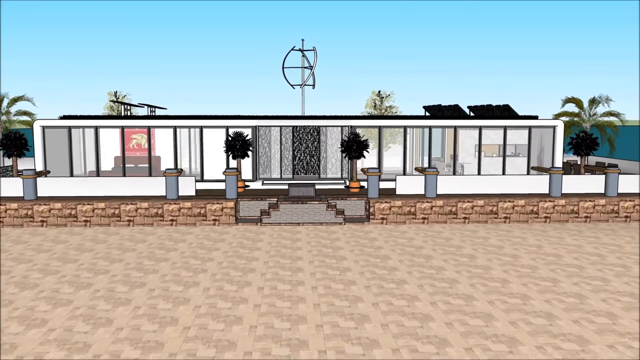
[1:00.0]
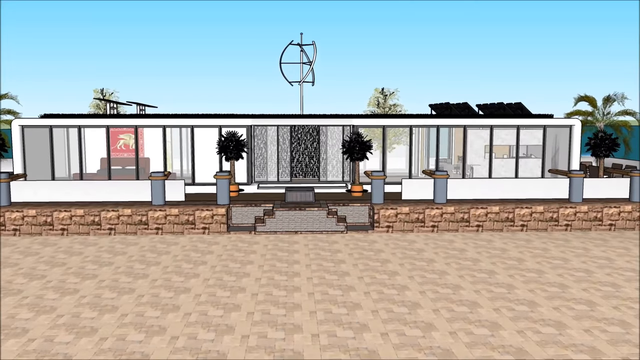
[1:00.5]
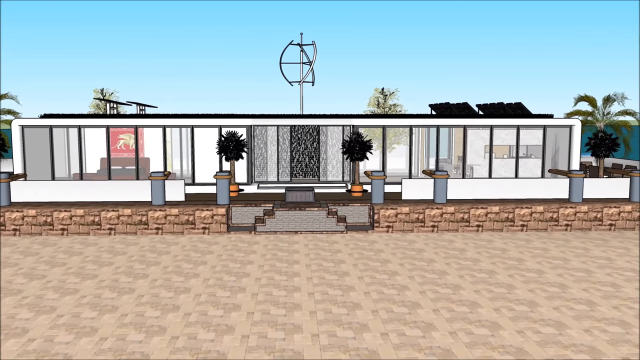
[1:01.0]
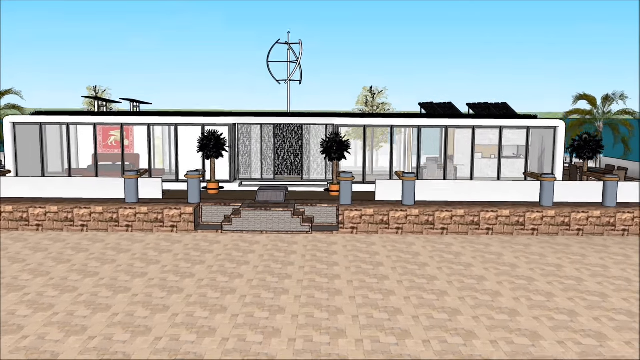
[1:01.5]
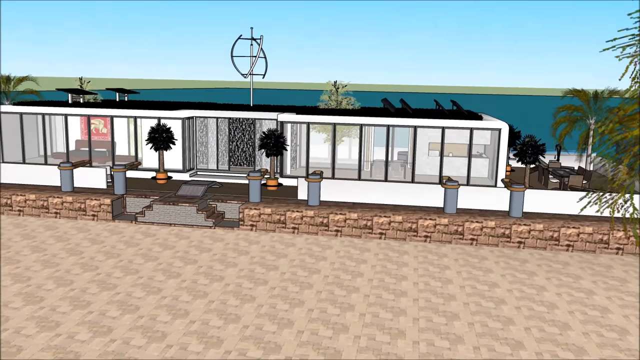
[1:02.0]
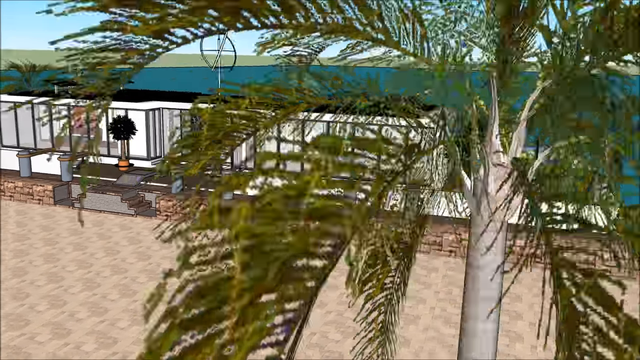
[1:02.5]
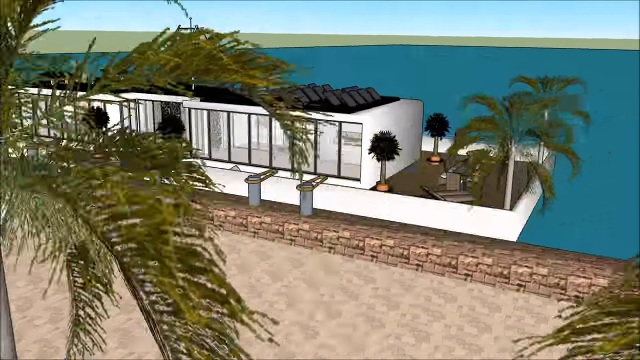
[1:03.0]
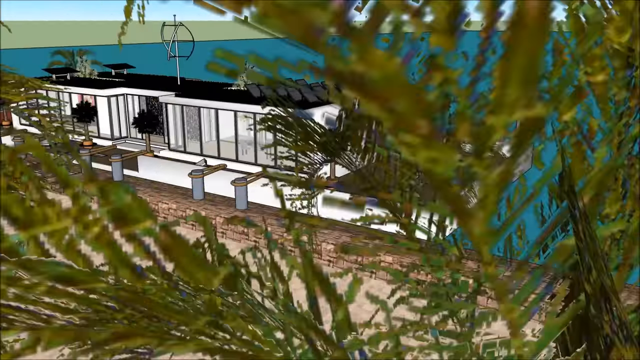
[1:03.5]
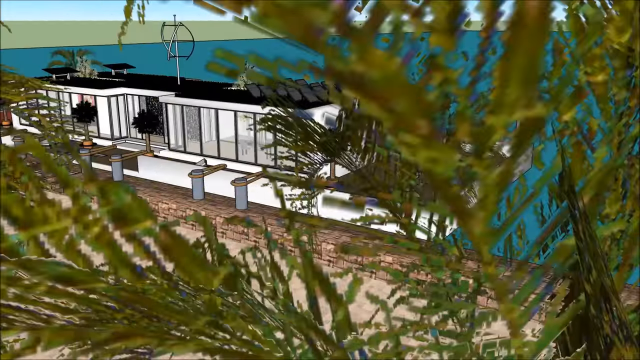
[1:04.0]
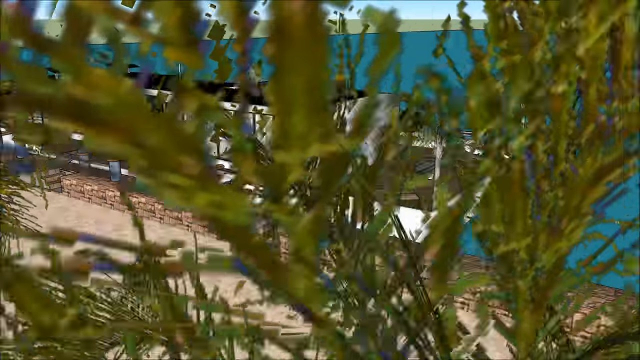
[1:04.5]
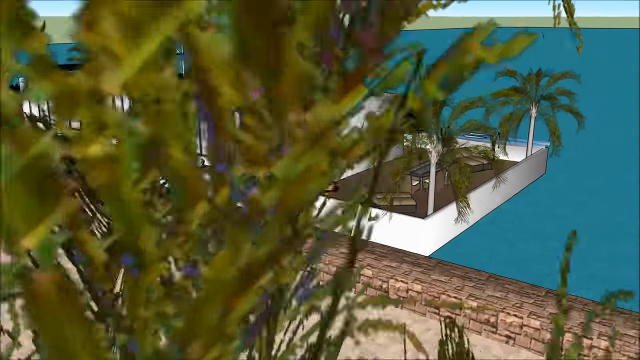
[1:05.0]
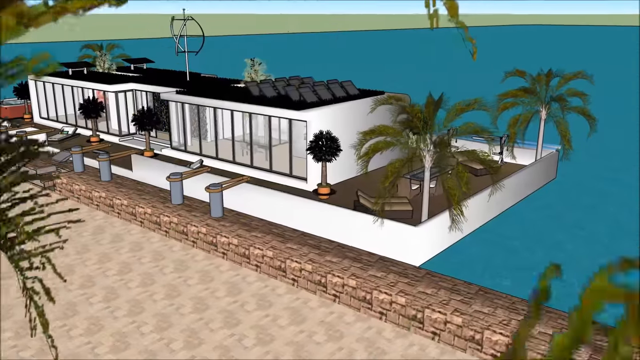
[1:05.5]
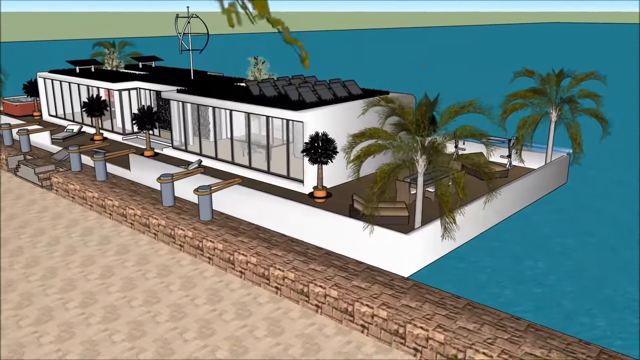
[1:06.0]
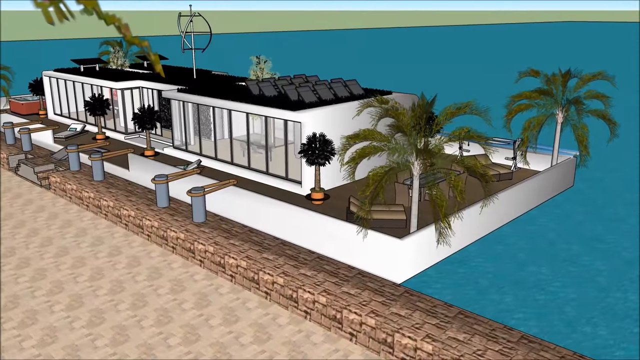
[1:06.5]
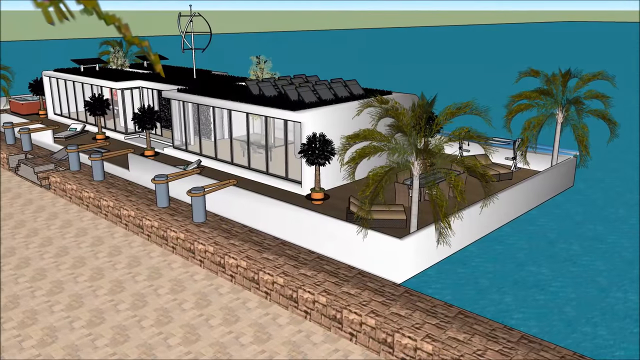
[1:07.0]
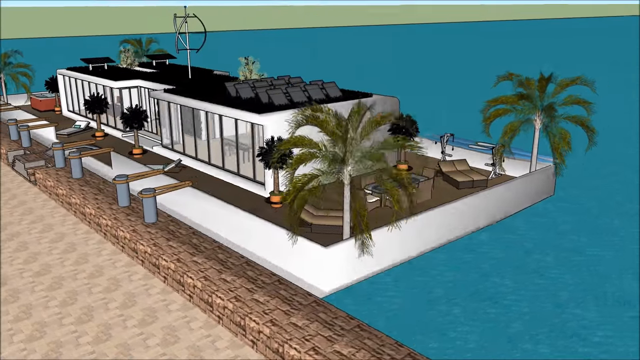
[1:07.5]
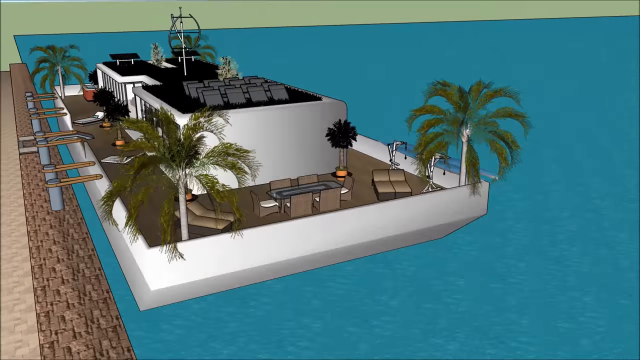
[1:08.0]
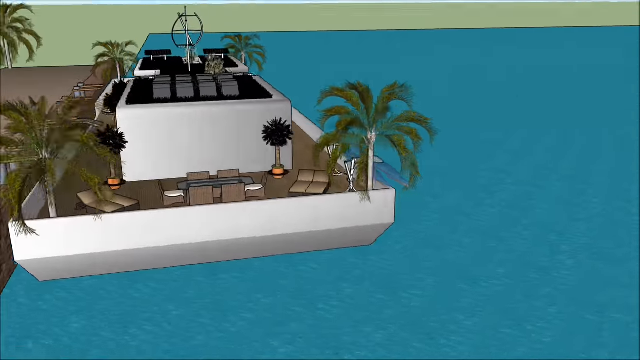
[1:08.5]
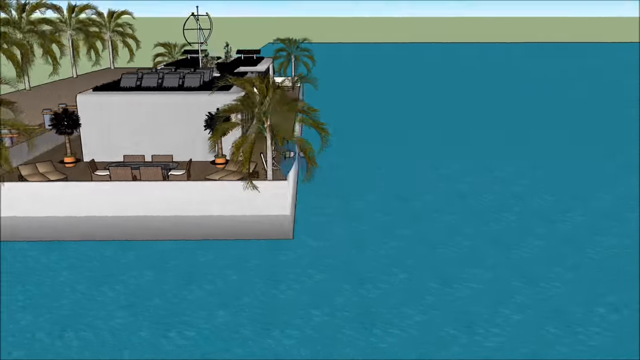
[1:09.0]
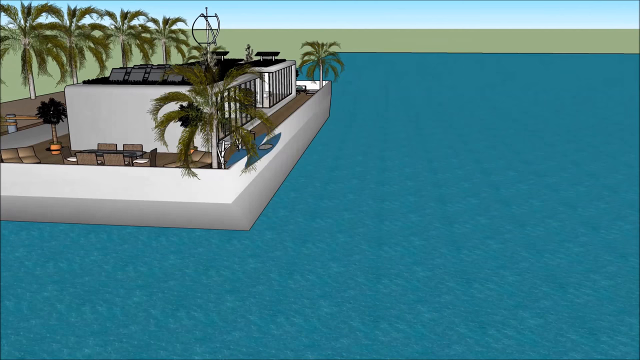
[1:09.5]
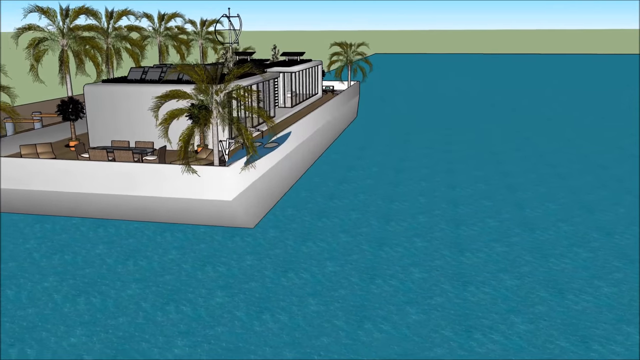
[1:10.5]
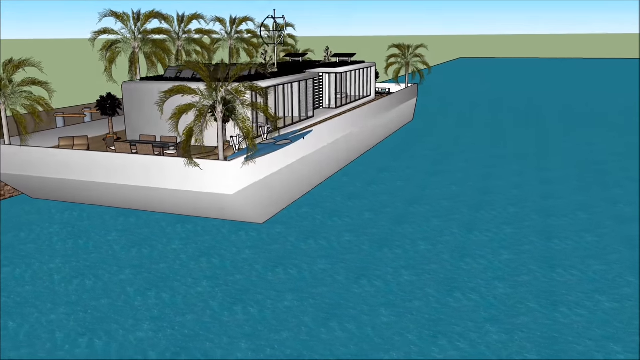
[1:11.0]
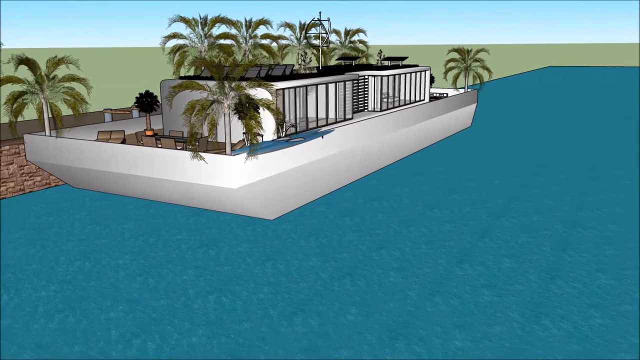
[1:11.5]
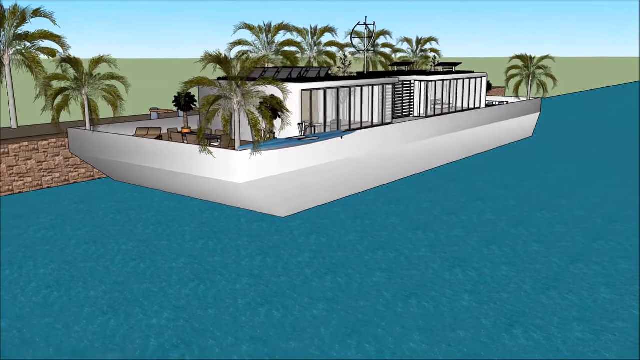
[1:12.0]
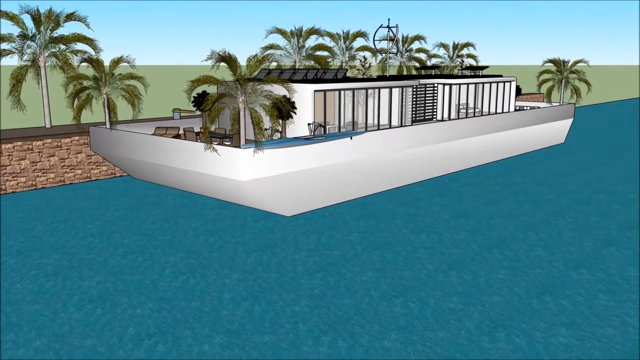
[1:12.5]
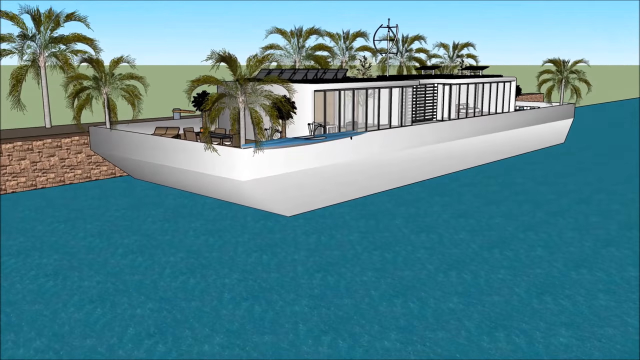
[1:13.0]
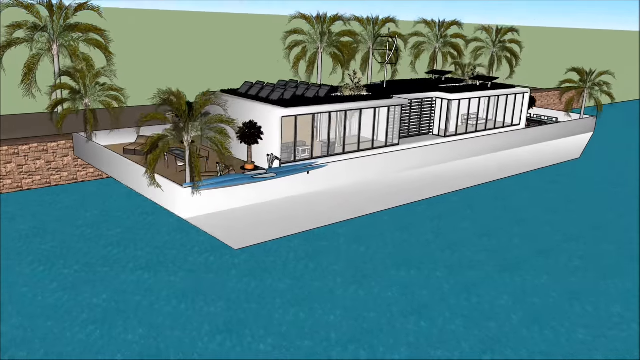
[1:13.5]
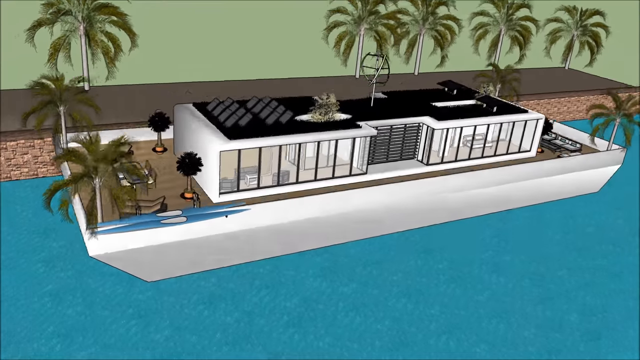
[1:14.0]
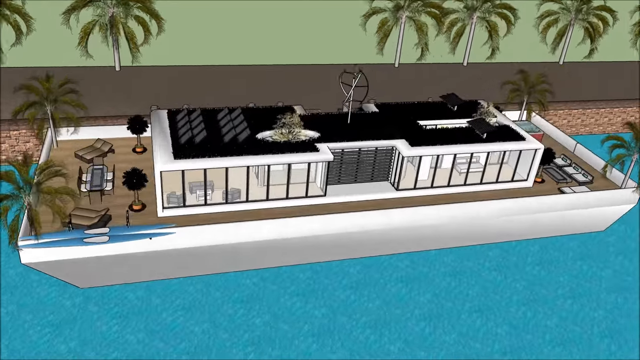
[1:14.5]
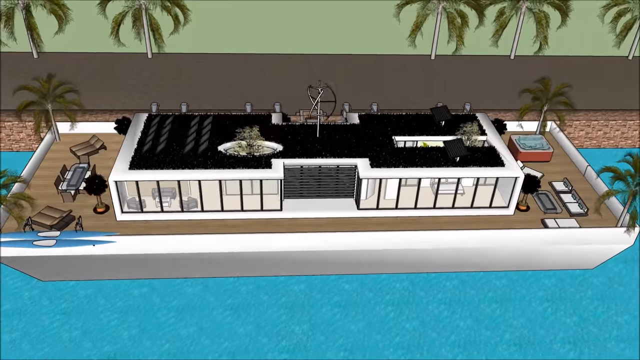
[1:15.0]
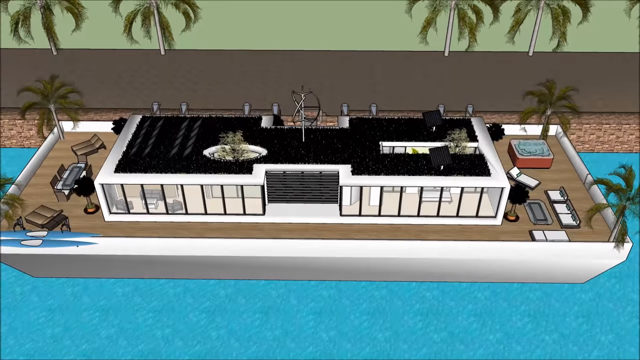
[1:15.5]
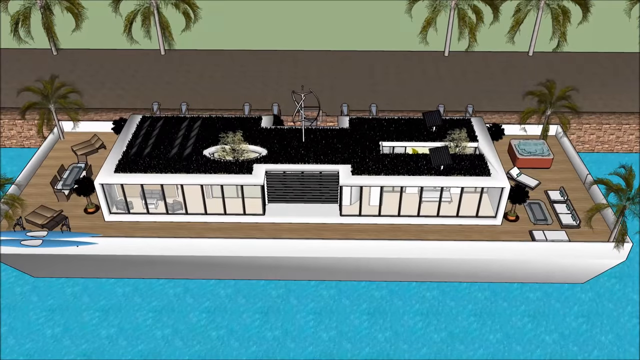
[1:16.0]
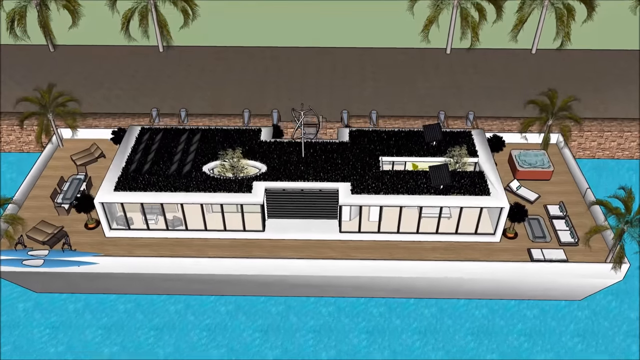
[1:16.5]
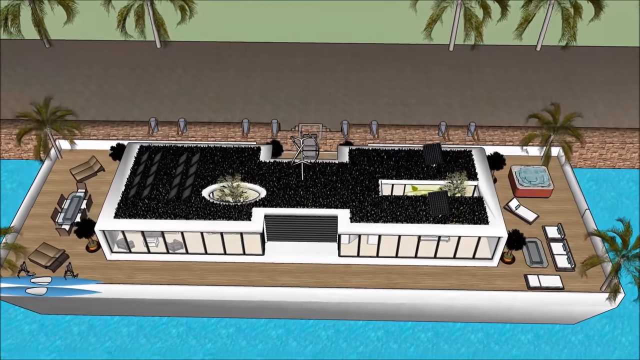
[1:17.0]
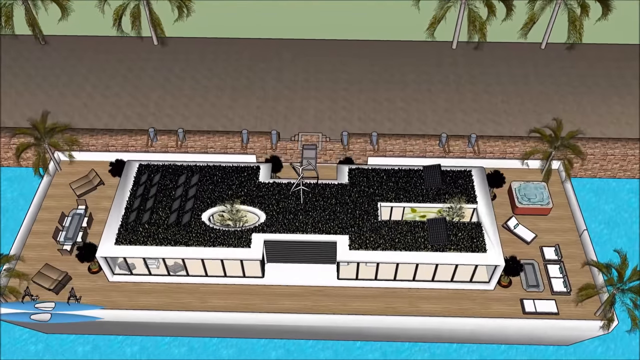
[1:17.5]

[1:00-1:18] A lot of blue sky appears with a building that kind of looks like a beach house, with many panes of glass, a brown area that looks like sand, and many palm trees kind of surrounding the house. The view kind of zooms in a little, stops, then moves to the side, where briefly only the inside of the palm tree is visible, before moving further over to show more of the side of the house and some areas to relax with additional trees. It kind of spins around, showing how much water surrounds the house, and continues to spin, showing many trees and some stuff on top of the house, with an object kind of pointing out of it.